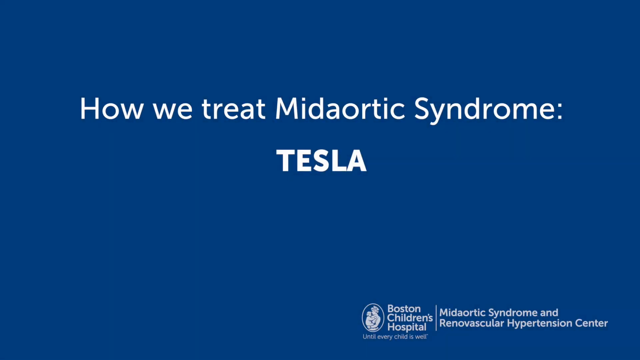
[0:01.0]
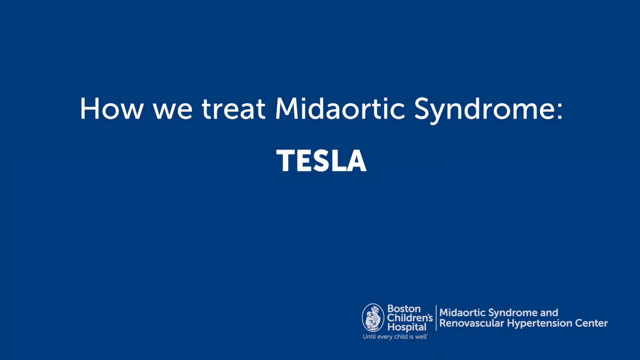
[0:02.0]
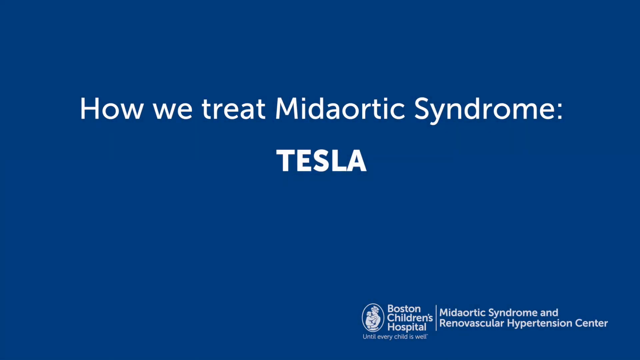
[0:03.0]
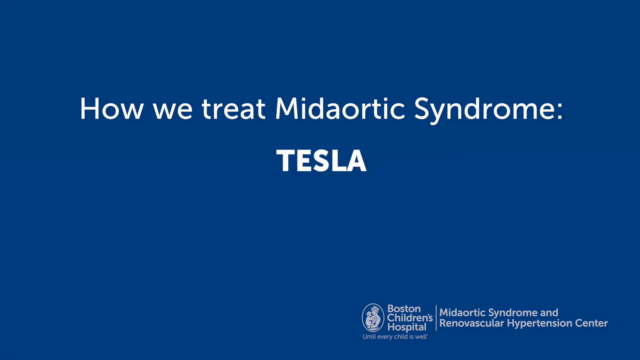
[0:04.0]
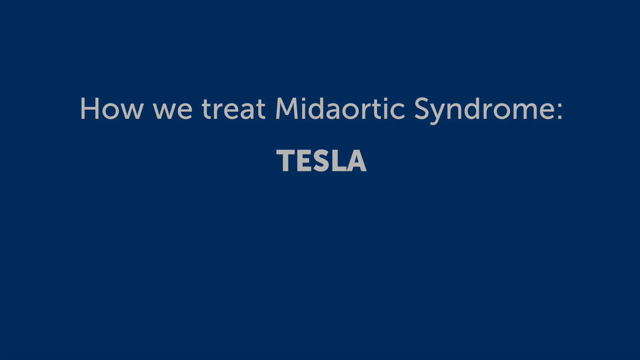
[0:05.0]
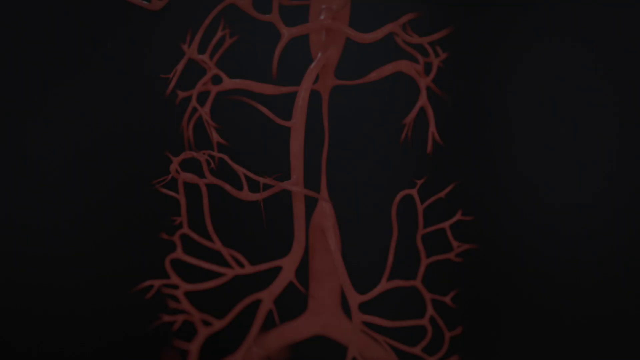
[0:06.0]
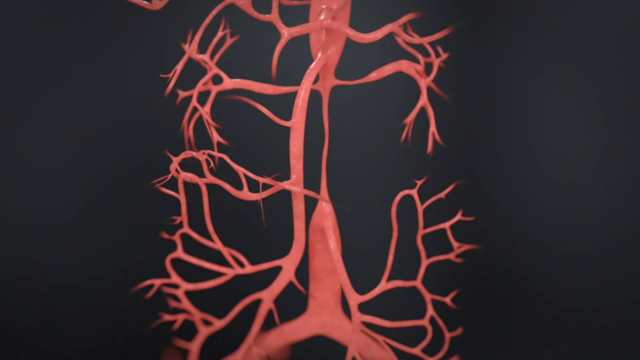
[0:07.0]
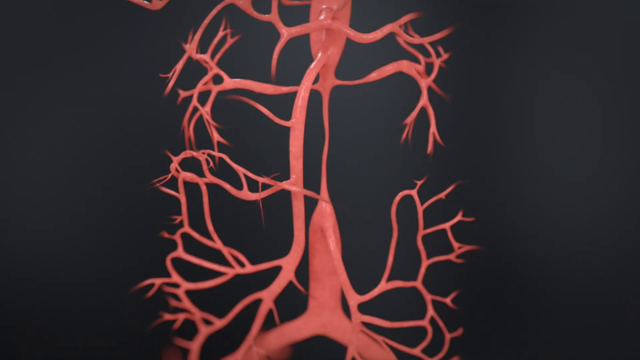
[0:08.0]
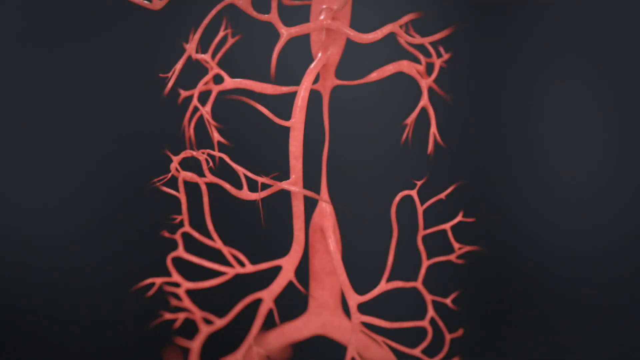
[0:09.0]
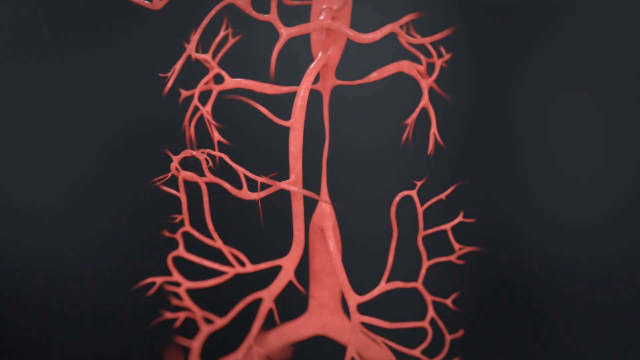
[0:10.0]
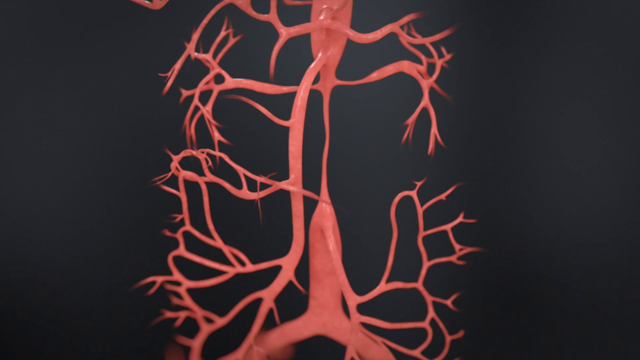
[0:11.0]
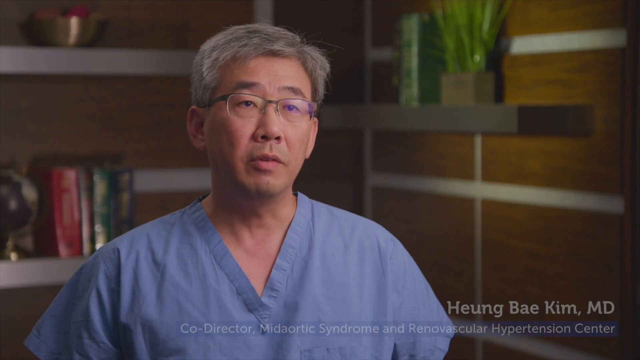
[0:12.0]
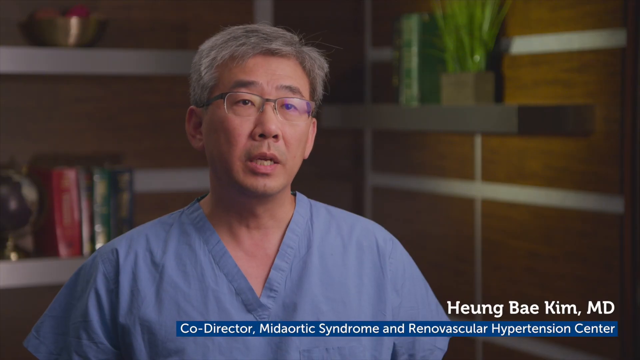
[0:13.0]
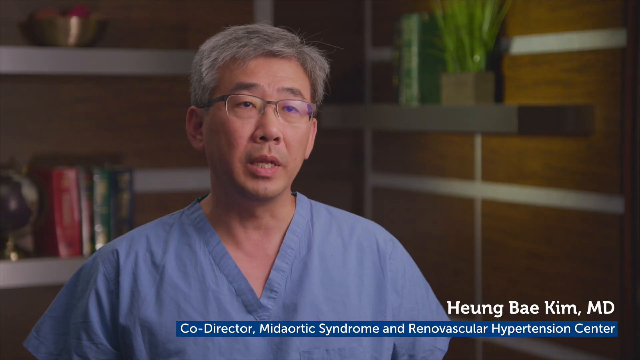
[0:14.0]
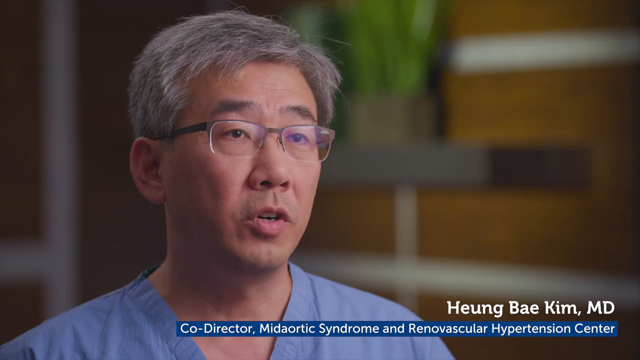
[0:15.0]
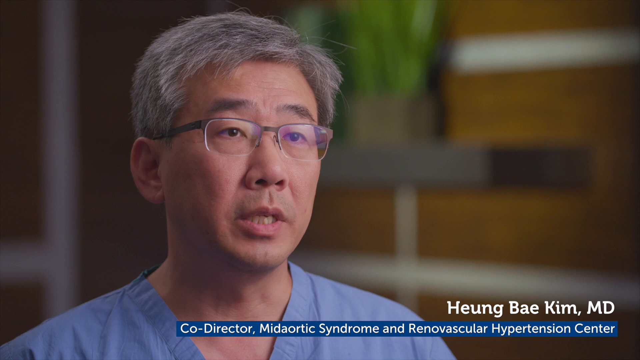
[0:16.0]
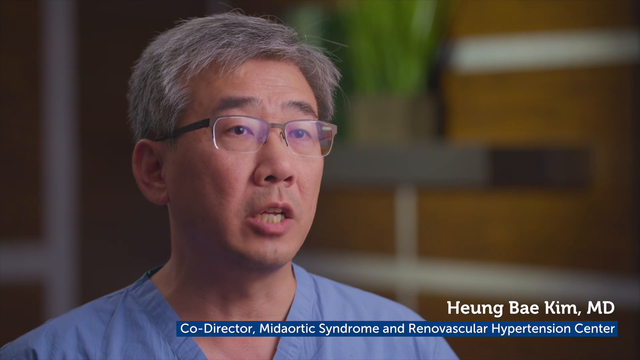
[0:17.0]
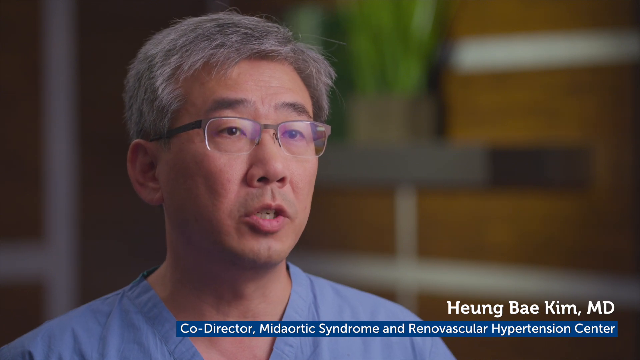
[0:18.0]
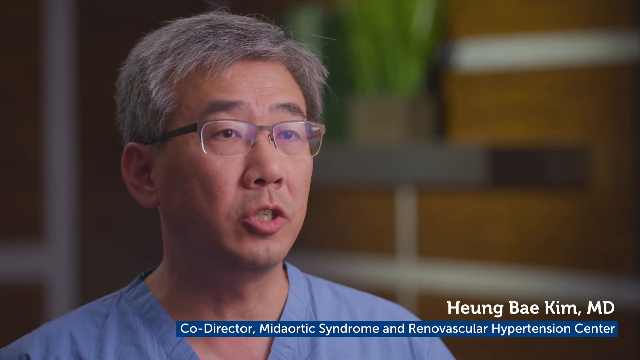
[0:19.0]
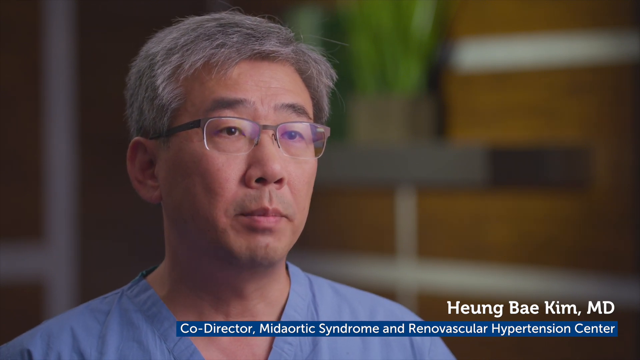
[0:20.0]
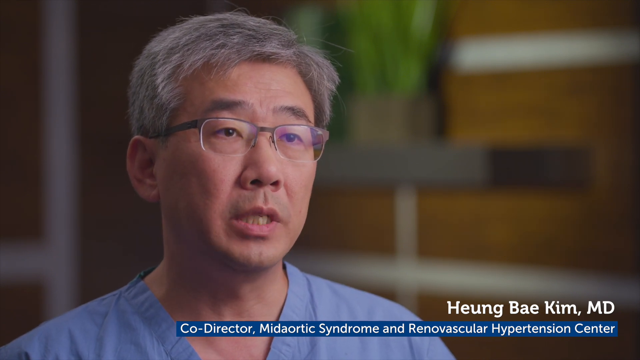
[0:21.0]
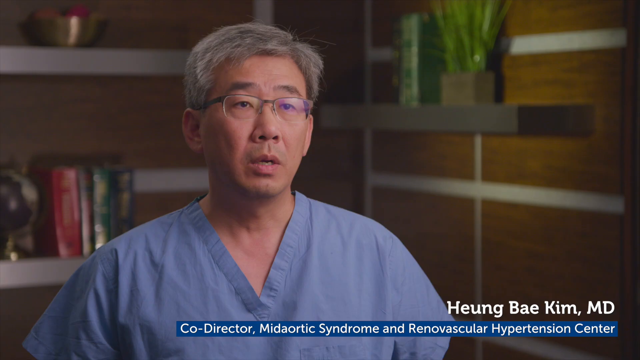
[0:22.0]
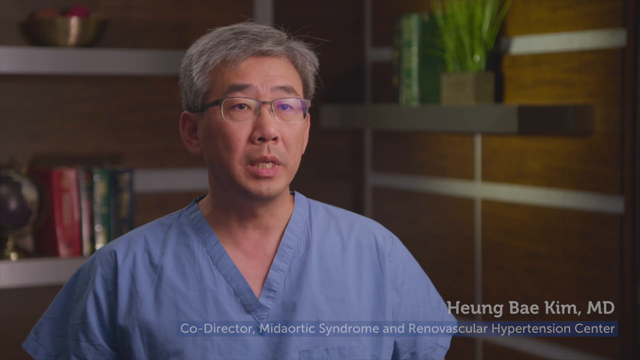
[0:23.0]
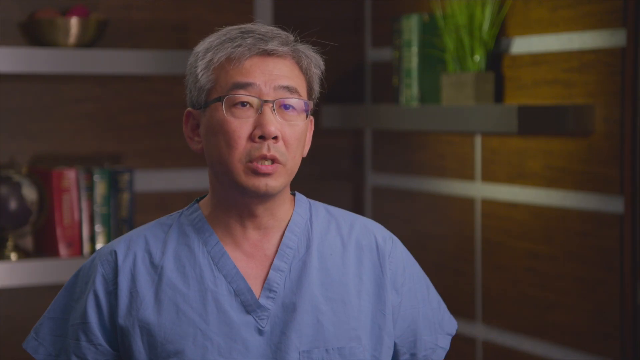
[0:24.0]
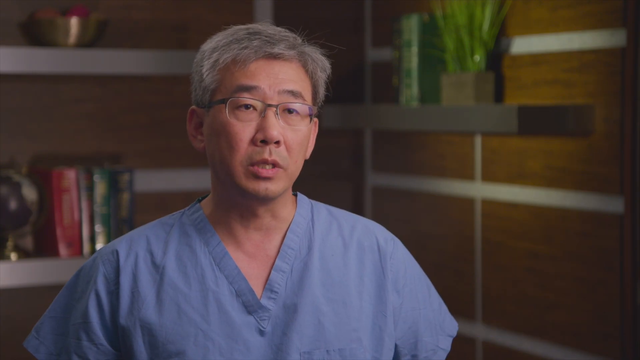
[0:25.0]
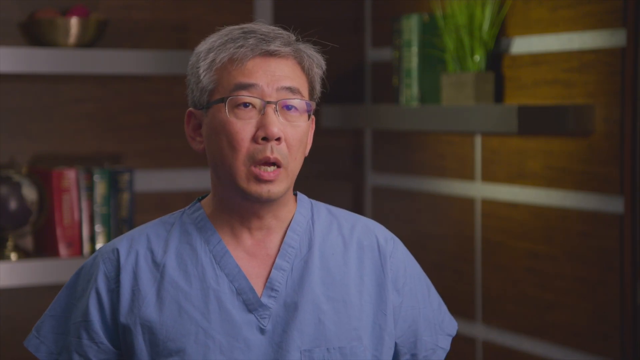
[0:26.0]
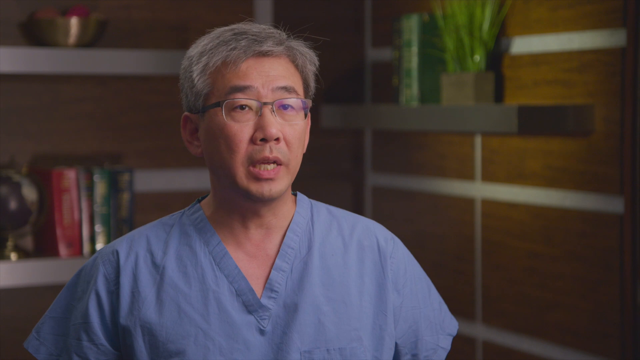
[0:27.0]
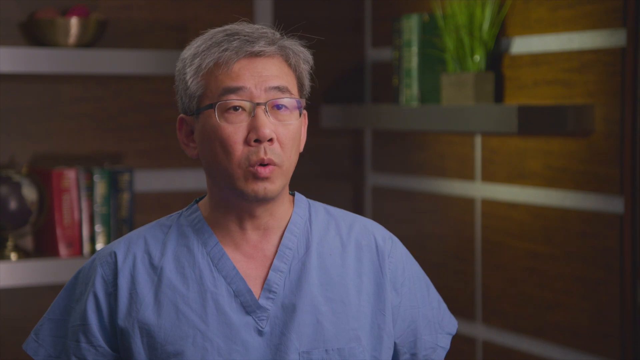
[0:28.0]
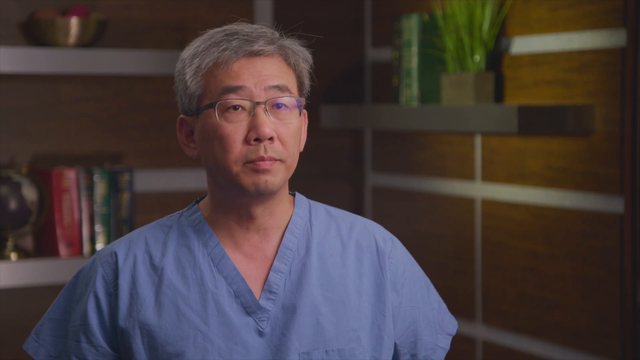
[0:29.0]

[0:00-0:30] The video opens on a dark blue background with white text centered toward the top of the screen that reads "How we treat mid-aortic syndrome:" and, centered directly below it in bold white font, "Tesla". Toward the bottom right of the screen is a white Boston Children's Hospital logo, followed by a vertical dashed line, and to the right of it the text "Mid-Aortic Syndrome and Renovascular Hypertension Center". The screen fades out to a black background, and a red network of veins appears in the center of the screen. The scene then changes to an older Asian man positioned toward the left side of the screen. He wears round eyeglasses and blue v-neck surgical scrubs, and he has short gray hair parted on the far right side and combed over to the left.